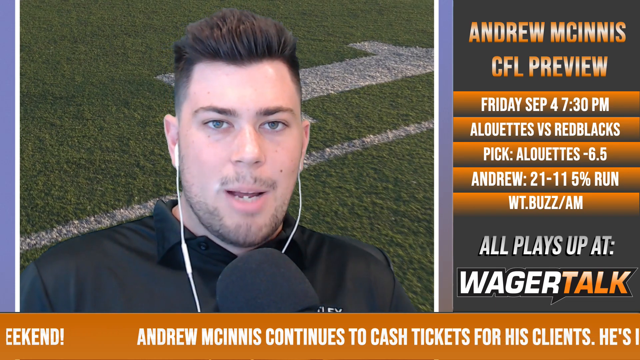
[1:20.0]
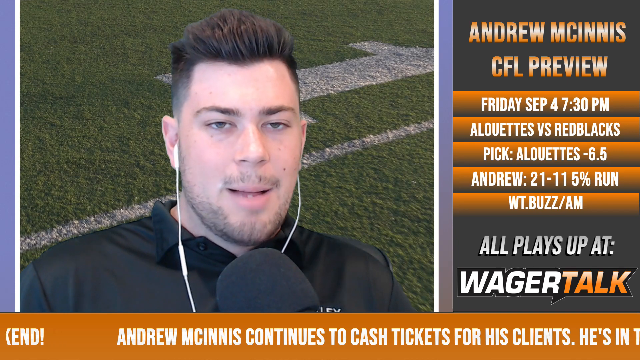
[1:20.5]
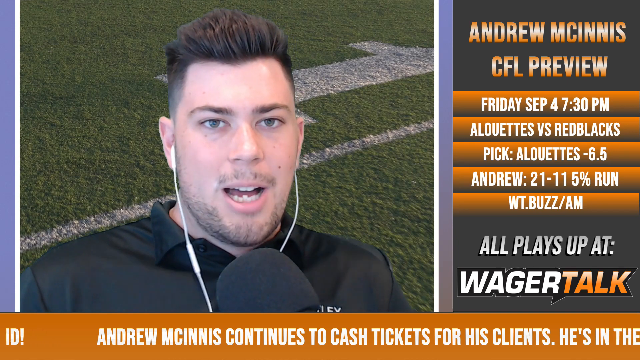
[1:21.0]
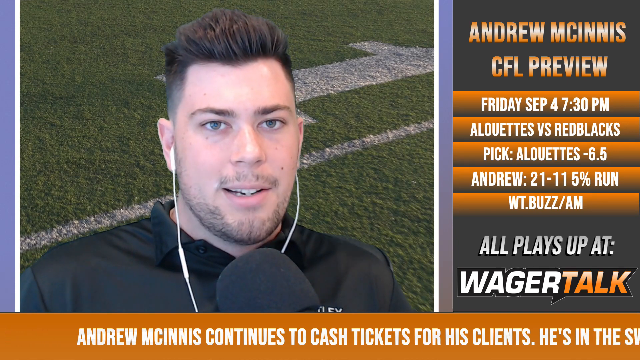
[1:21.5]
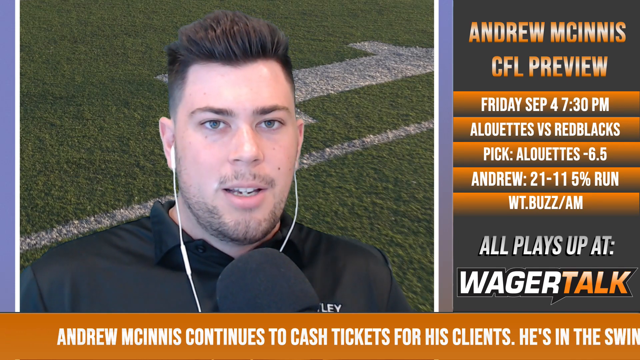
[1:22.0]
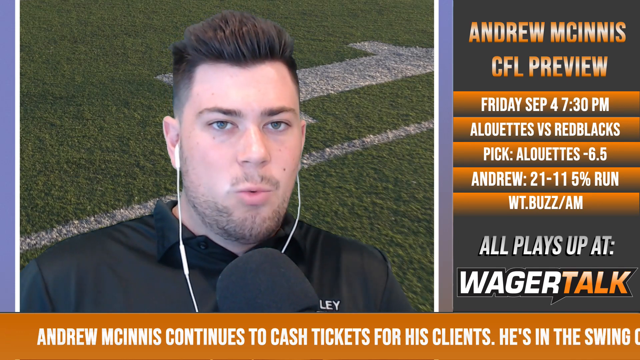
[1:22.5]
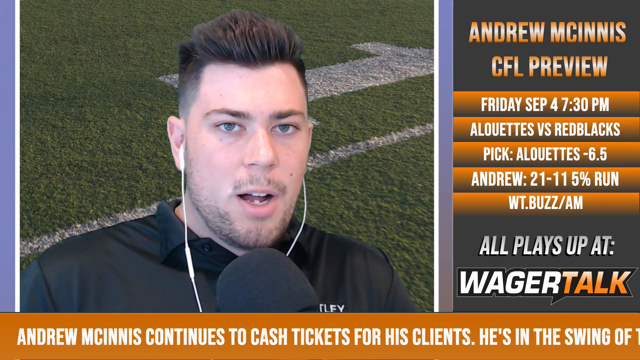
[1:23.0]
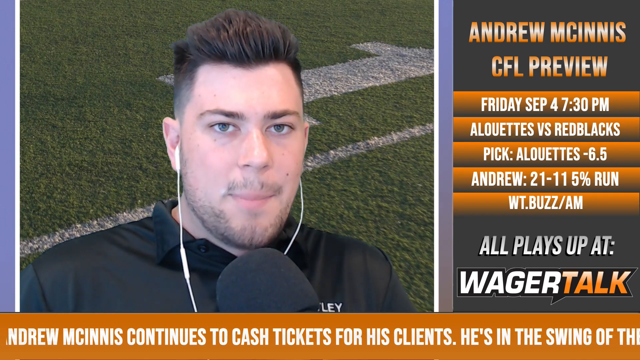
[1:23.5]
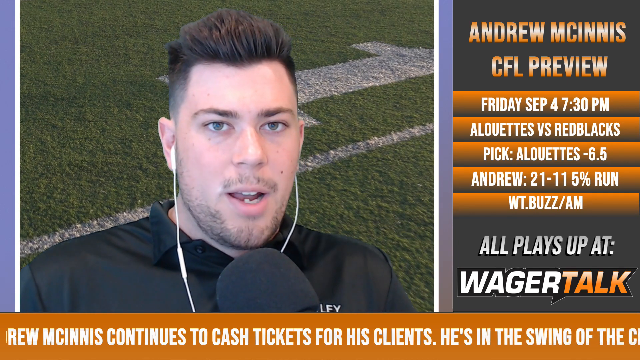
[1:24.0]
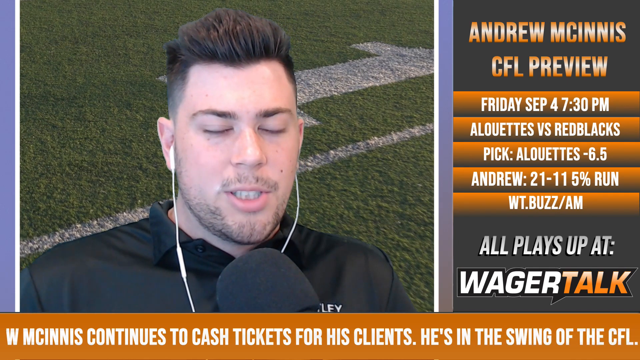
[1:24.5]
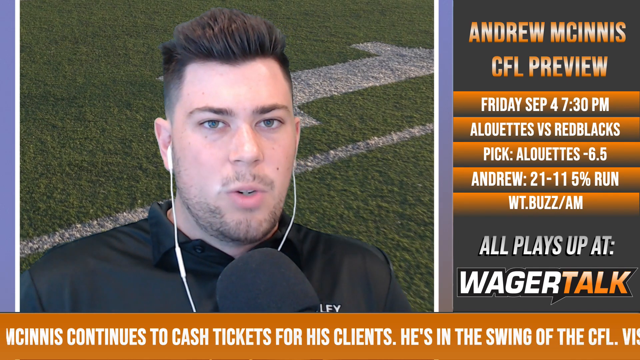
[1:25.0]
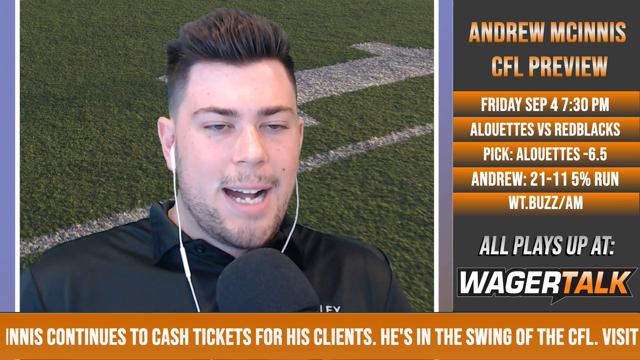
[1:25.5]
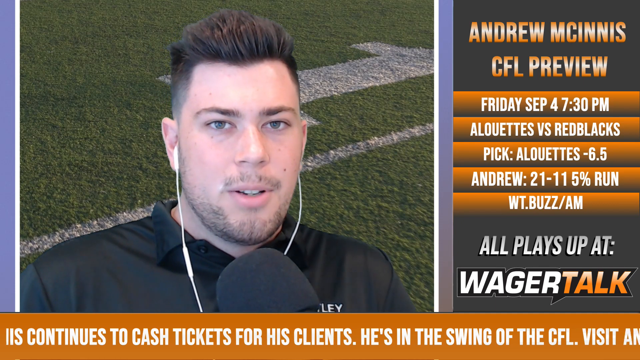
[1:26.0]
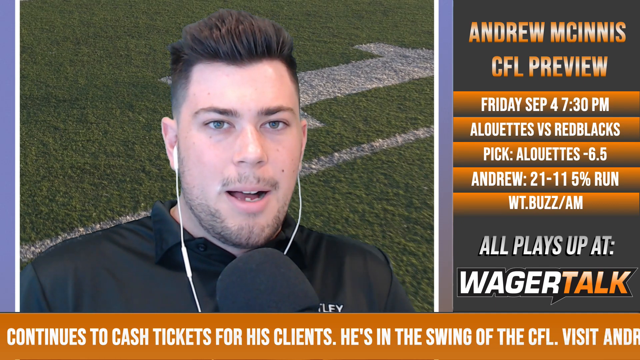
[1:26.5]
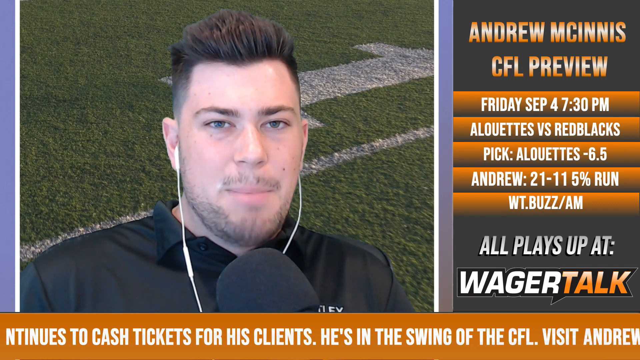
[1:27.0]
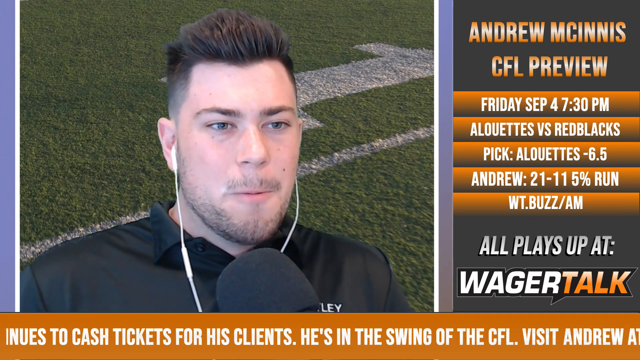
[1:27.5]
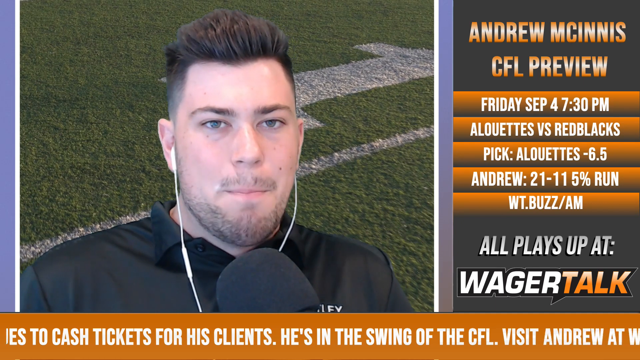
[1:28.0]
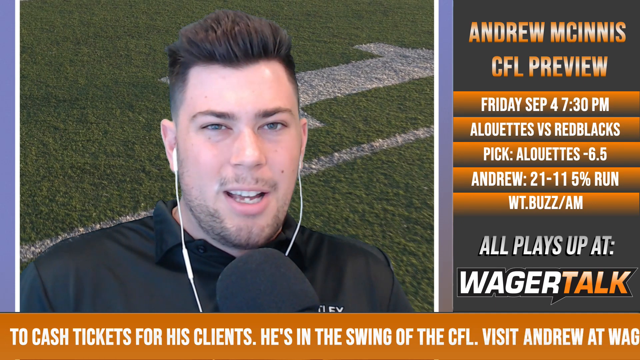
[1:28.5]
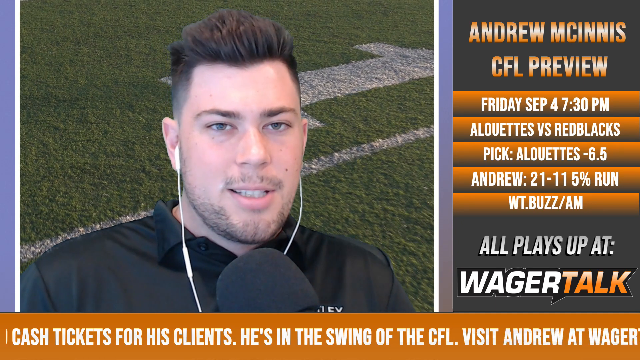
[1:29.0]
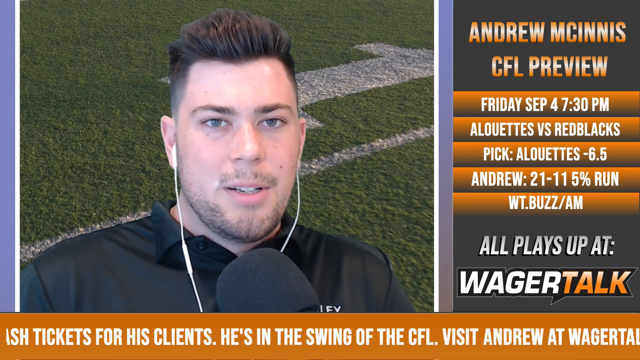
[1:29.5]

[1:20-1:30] A man talks into a microphone on the left-hand side of the split screen. Behind him is what looks like a football field; the grass looks very bumpy and rough but is all one green color, with lines painted horizontally and the number one behind him. It does not appear to be bright daylight on the field, as there doesn't seem to be much sun in the picture. The man kind of keeps shaking his head back and forth as he talks, and the background keeps fidgeting and jumping around in place. He wears a black shirt that looks smooth and silky, with a collar and buttons. His eyes appear grayish bluish brown, maybe hazel. Thin blue stripes on either side of his section separate it from the other parts of the screen.